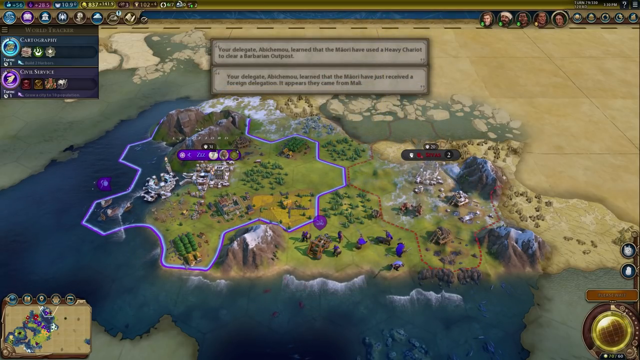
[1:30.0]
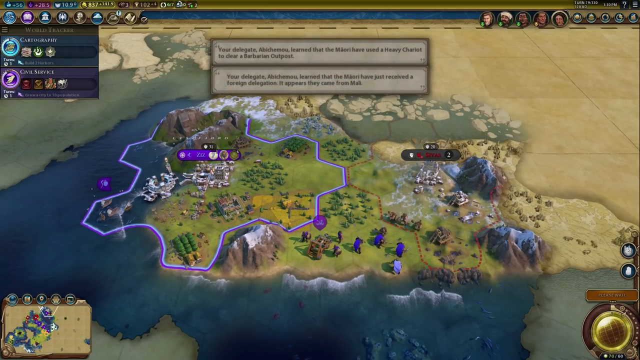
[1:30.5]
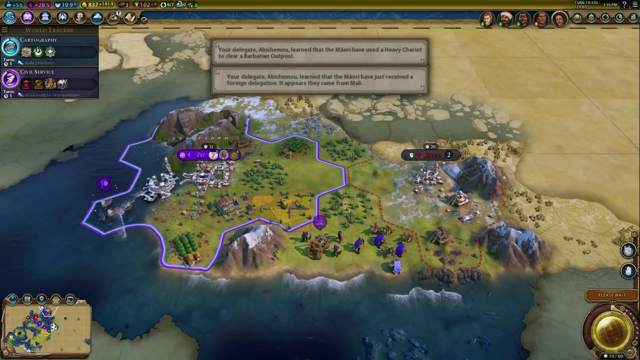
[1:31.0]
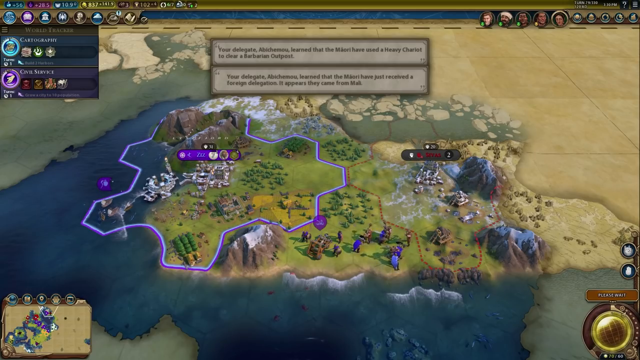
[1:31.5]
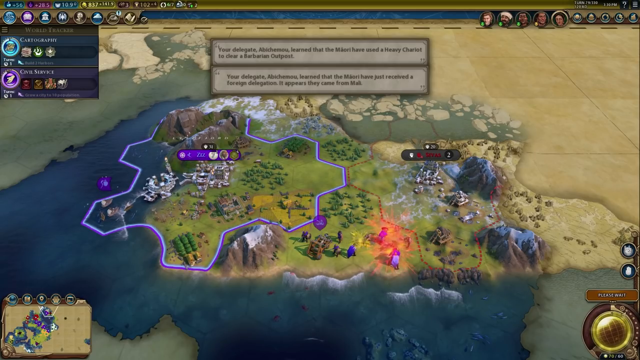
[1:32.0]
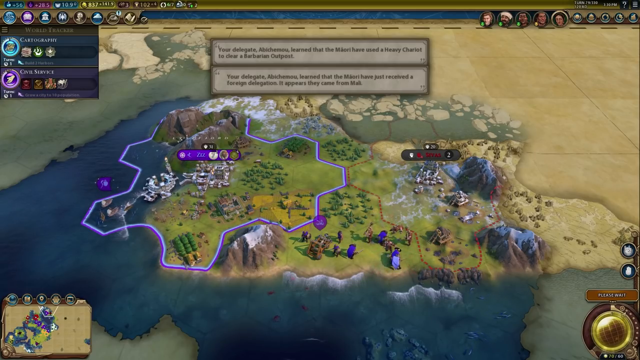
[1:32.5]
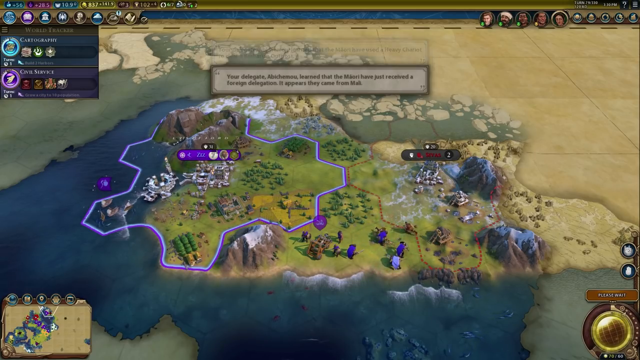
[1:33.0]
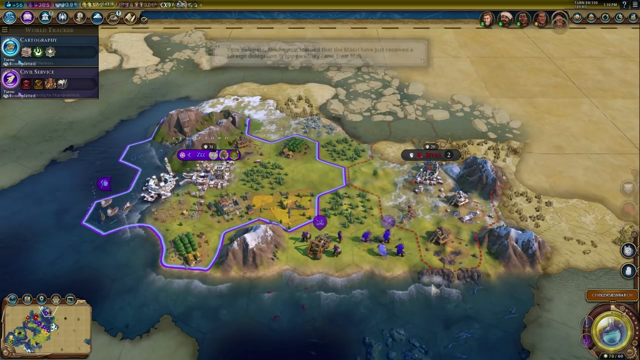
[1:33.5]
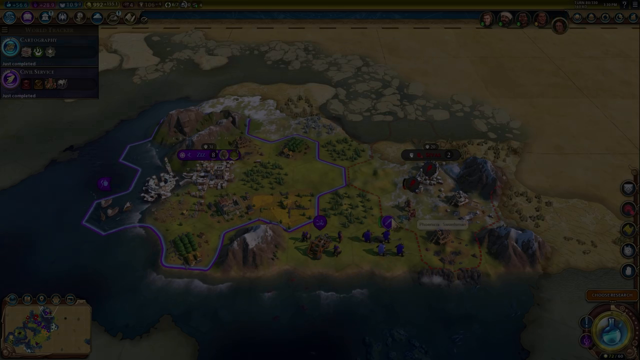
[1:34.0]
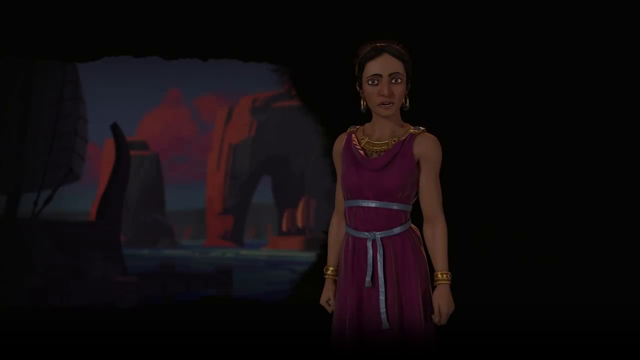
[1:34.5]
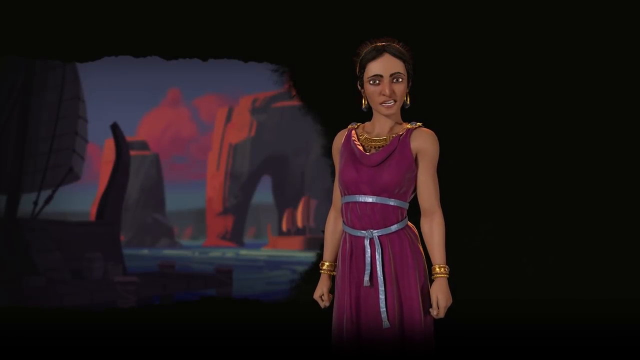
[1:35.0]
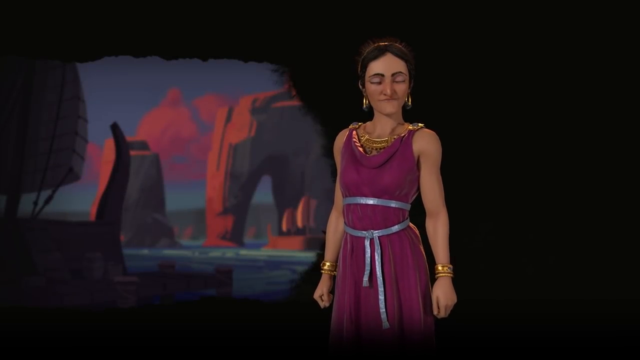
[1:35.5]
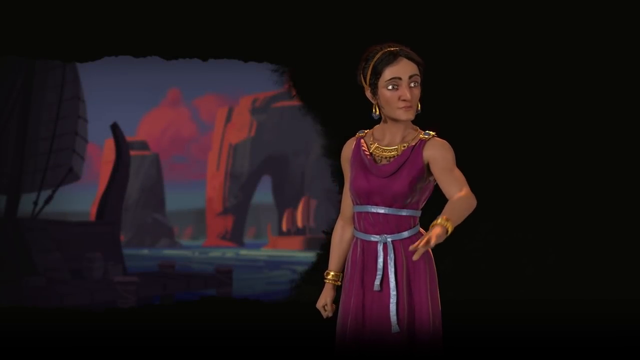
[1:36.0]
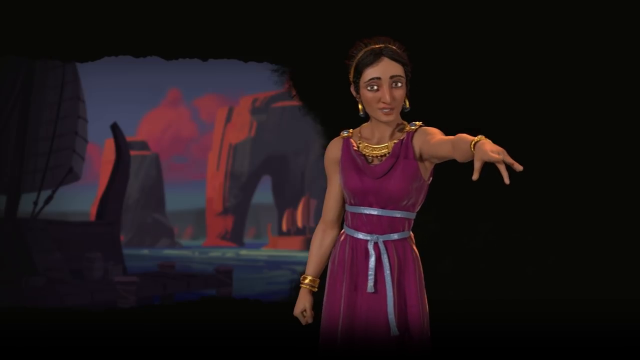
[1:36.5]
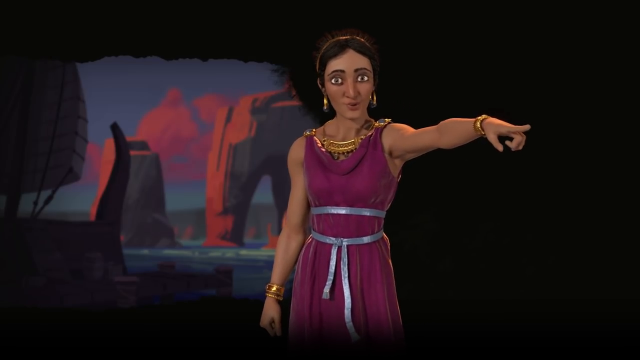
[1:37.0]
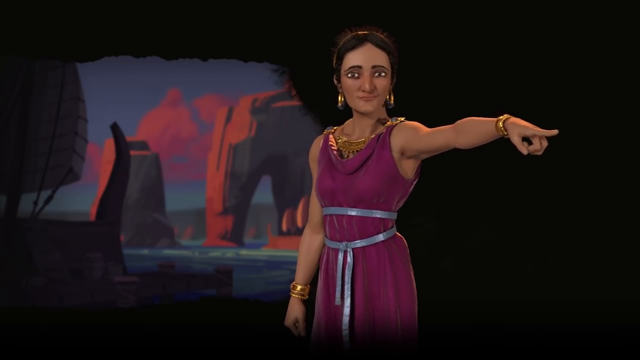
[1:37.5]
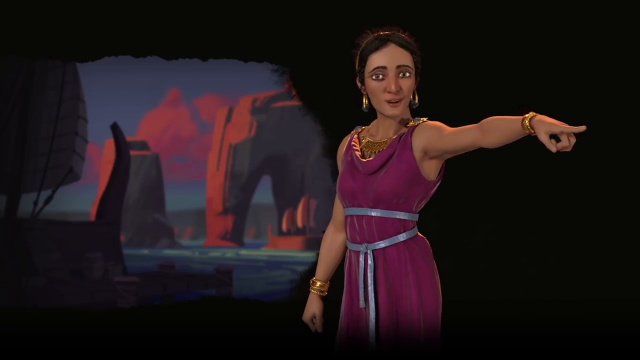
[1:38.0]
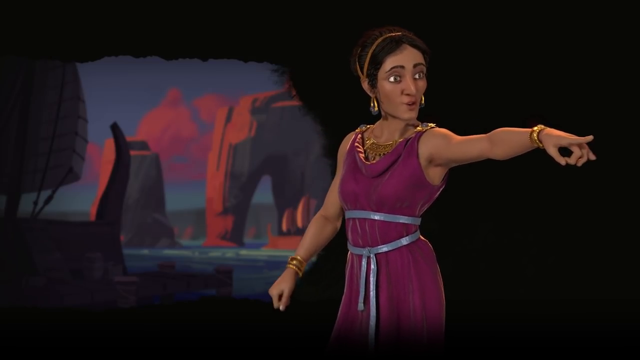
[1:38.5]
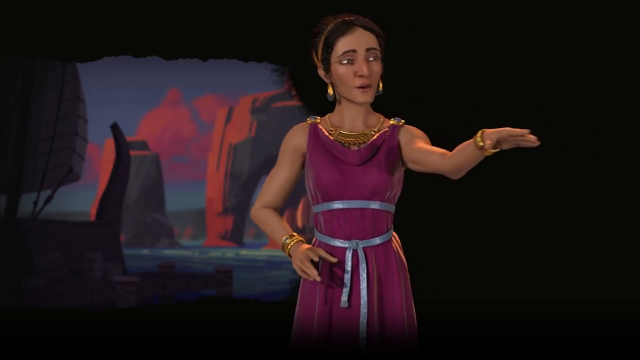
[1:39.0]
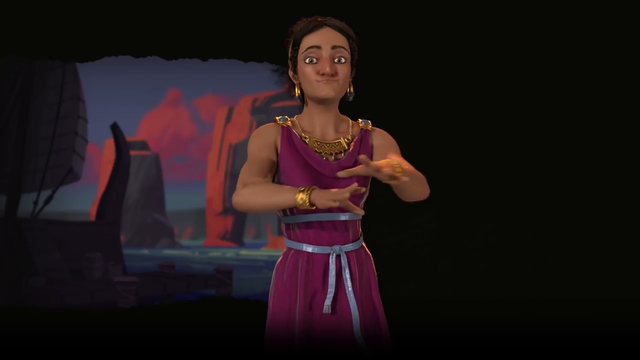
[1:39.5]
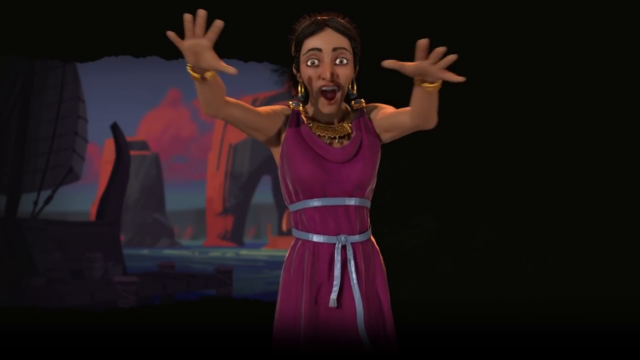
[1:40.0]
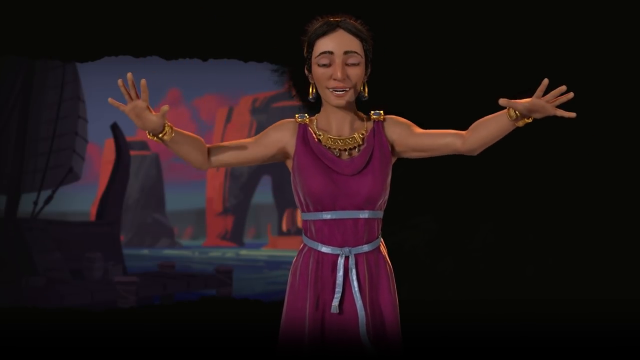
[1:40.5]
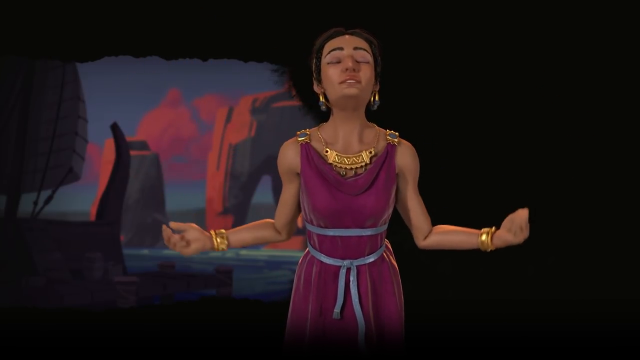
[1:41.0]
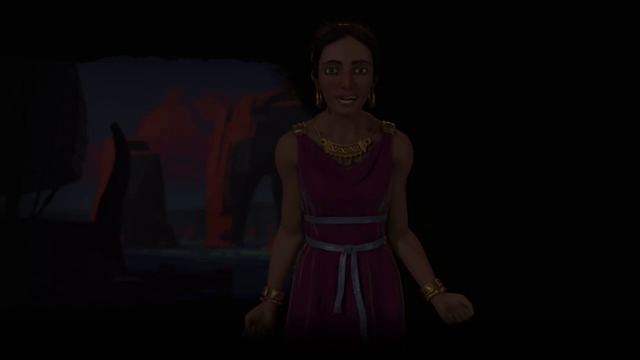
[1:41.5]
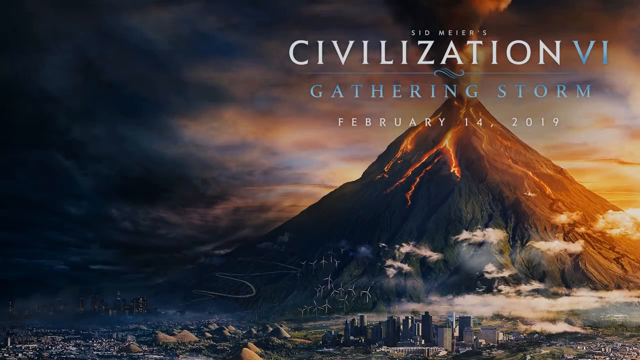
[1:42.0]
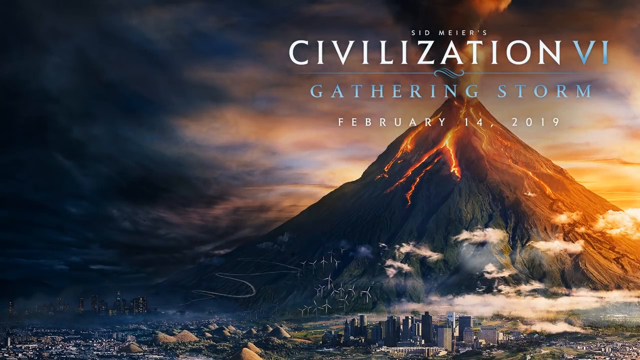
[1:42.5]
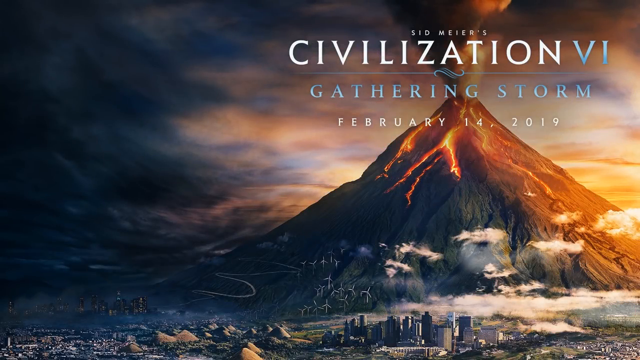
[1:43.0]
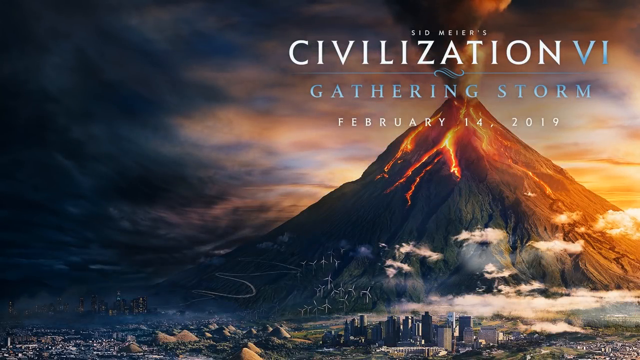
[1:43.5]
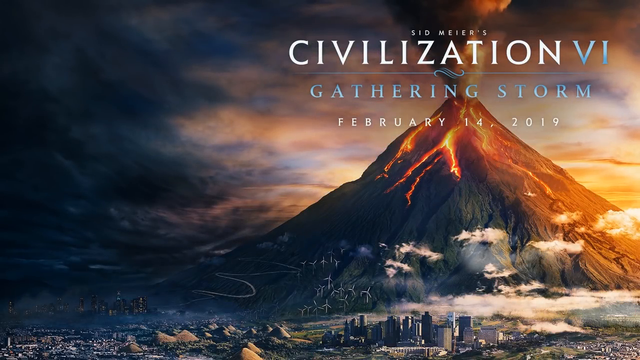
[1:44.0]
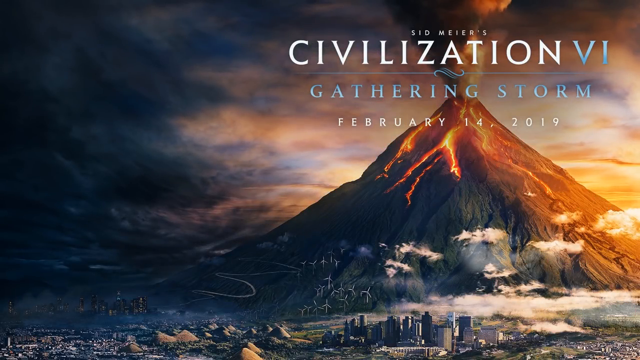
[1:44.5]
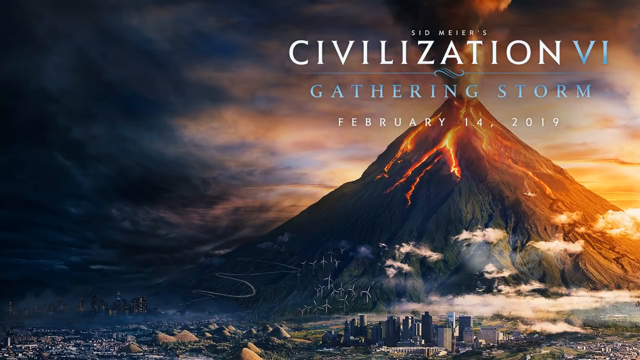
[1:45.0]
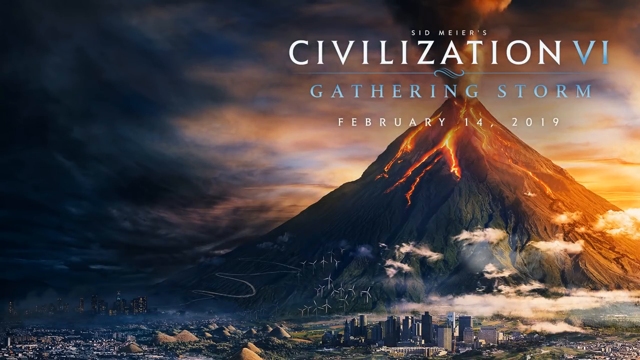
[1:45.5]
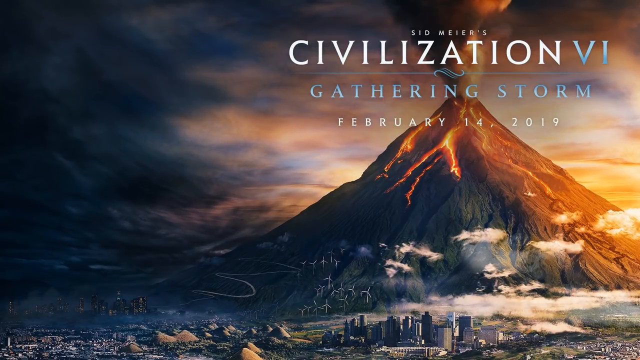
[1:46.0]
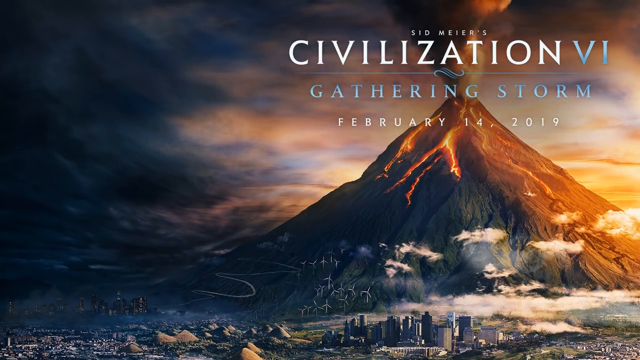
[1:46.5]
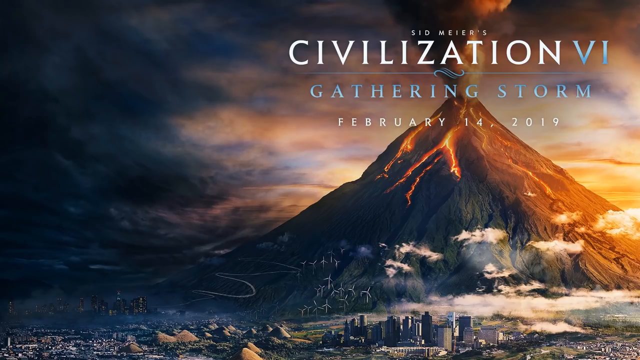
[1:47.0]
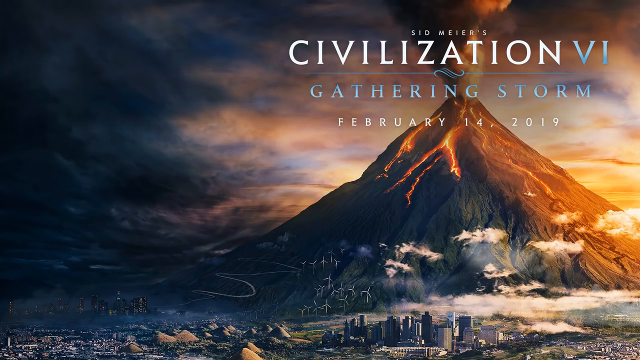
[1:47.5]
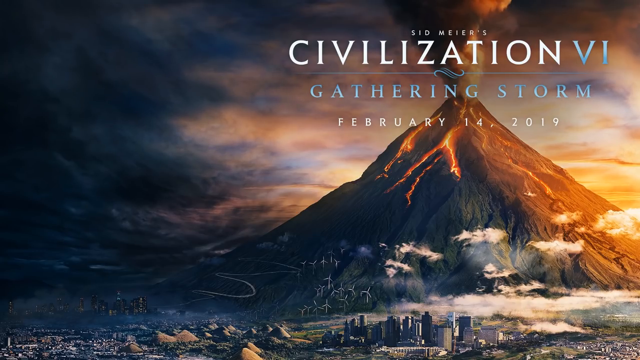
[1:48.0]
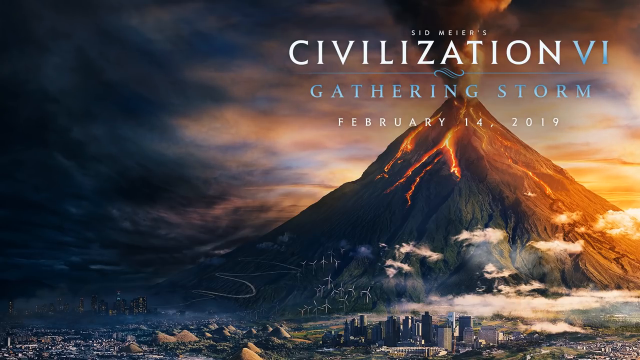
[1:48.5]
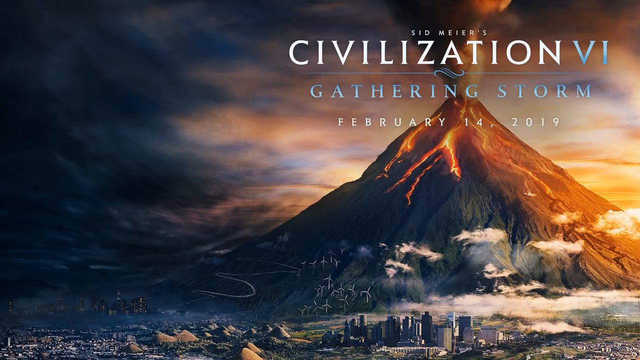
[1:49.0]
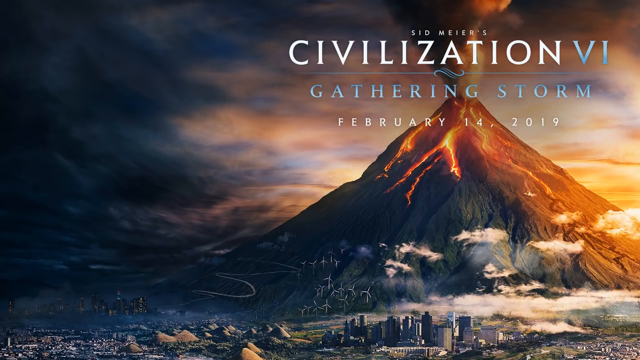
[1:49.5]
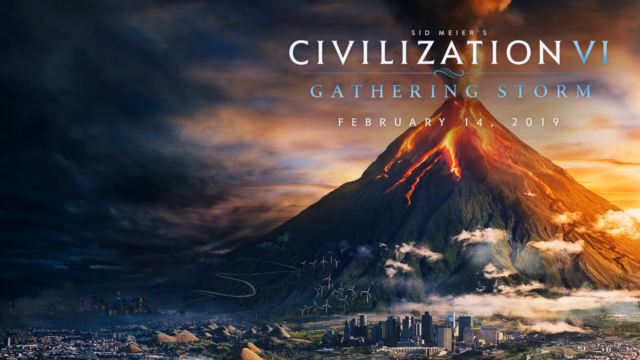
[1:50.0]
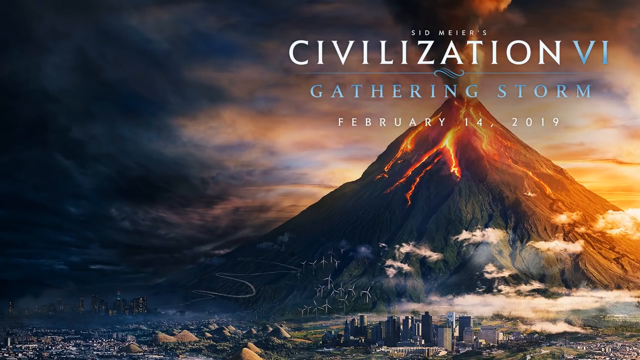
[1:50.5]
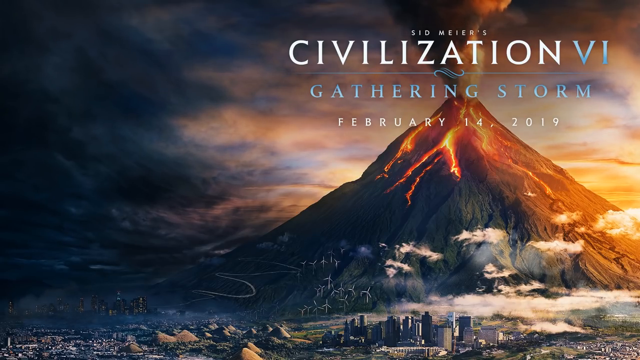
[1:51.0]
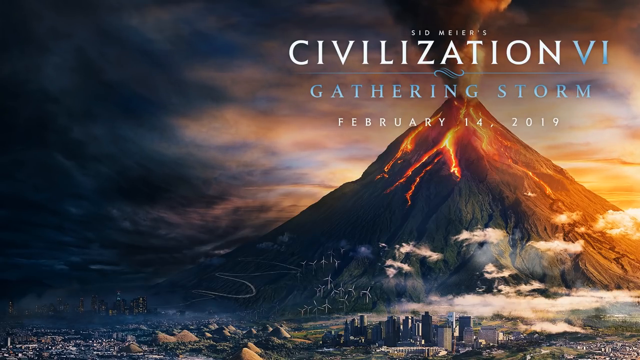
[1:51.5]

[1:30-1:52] The game is still being played. At the bottom of the map, a lot of human characters are running around; it is hard to tell whether they are fighting or developing those sections of the map. The video cuts back to the animated female character in the purple toga, who appears to be pointing and talking. After that, a title screen with the name of the game appears again, reading "Sid Meier's Civilization VI", followed by "Gathering Storm" and "February 14, 2019", apparently the release date. The video seems to be possibly an advertisement or preview for the game.